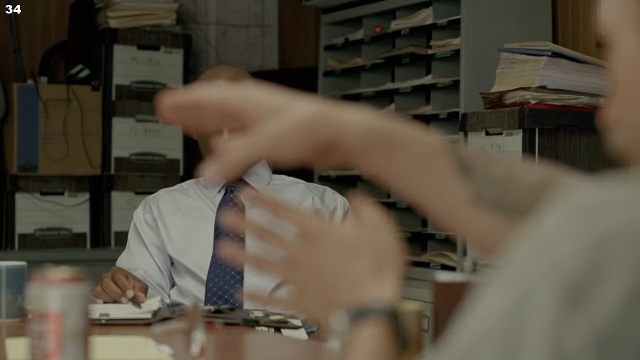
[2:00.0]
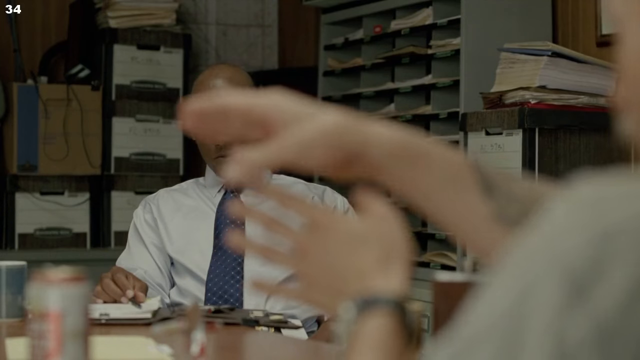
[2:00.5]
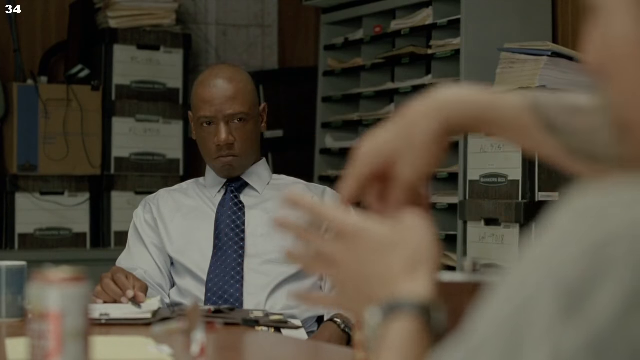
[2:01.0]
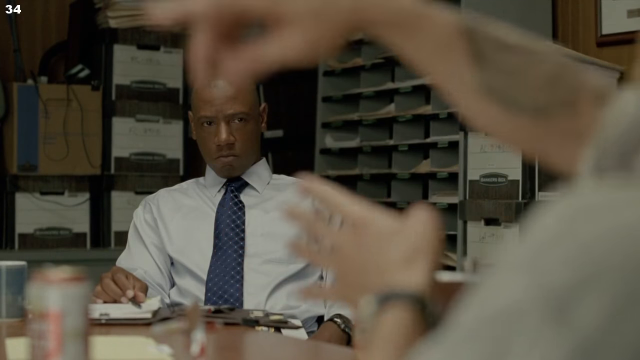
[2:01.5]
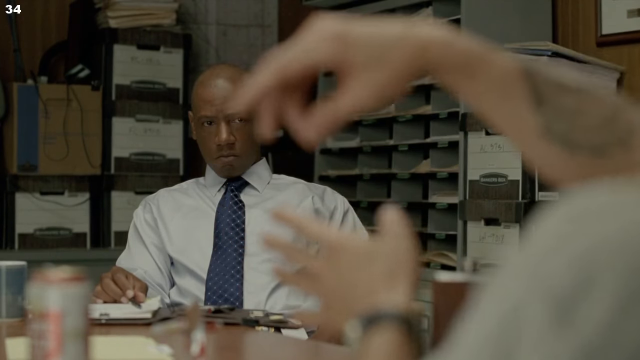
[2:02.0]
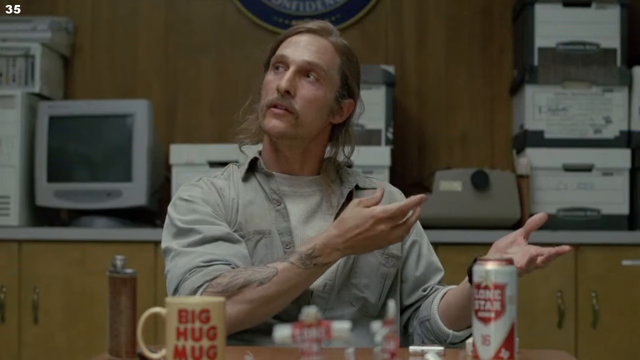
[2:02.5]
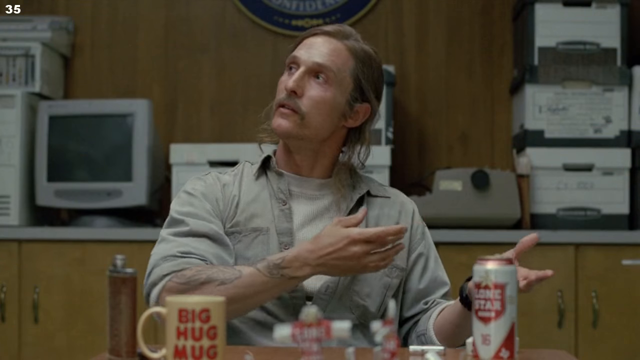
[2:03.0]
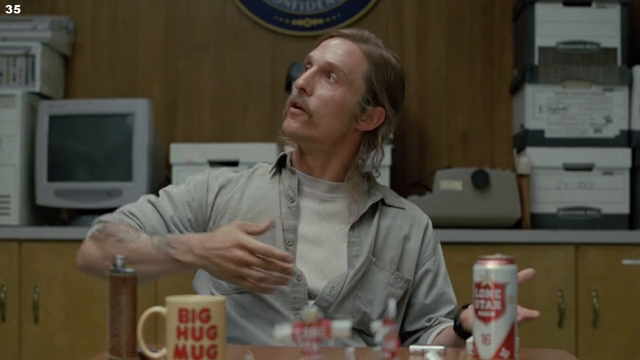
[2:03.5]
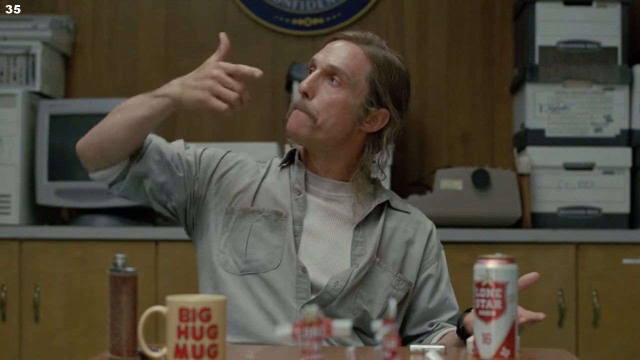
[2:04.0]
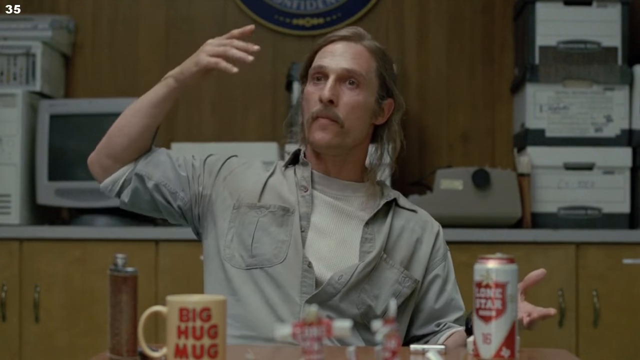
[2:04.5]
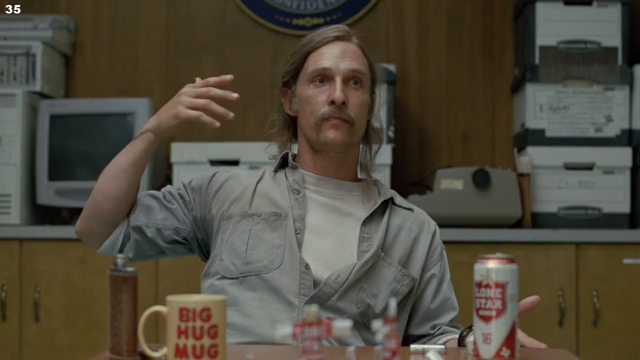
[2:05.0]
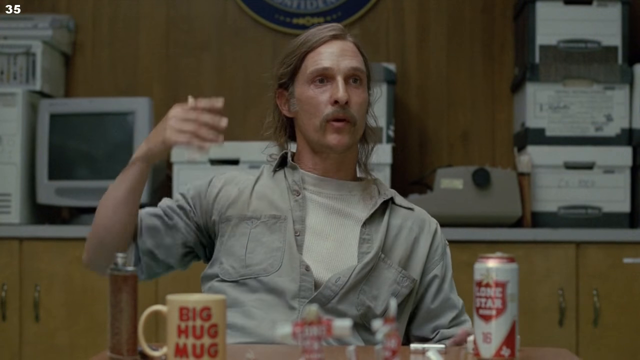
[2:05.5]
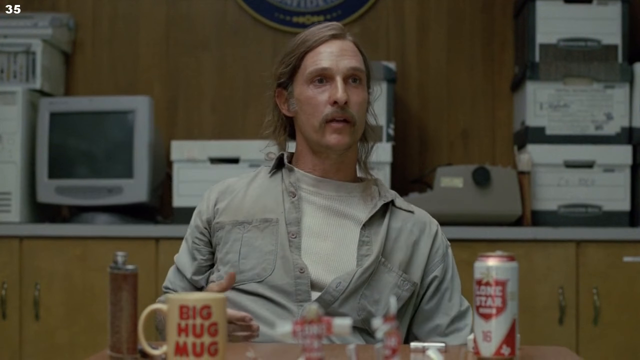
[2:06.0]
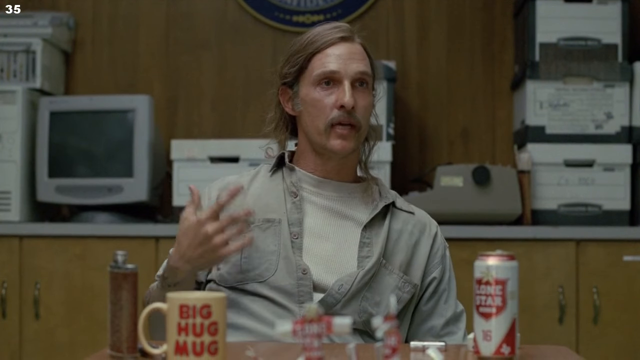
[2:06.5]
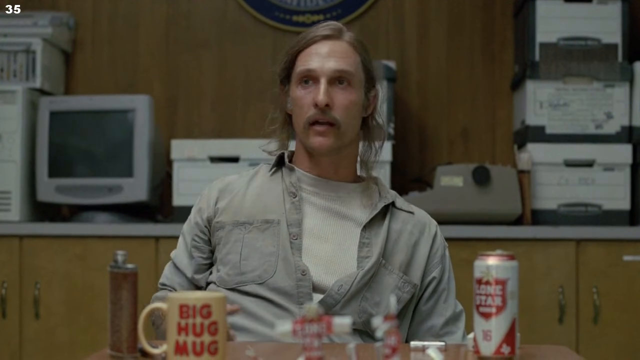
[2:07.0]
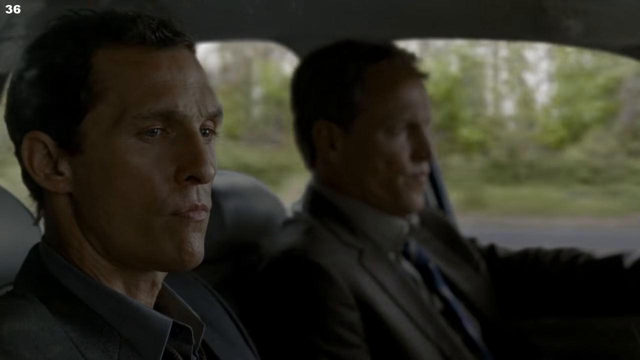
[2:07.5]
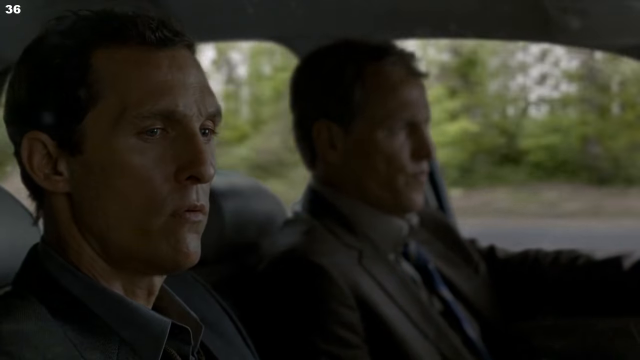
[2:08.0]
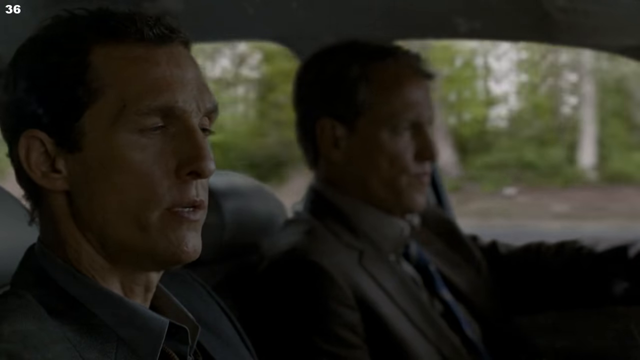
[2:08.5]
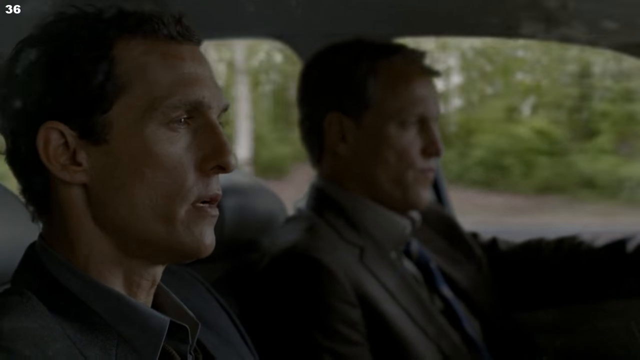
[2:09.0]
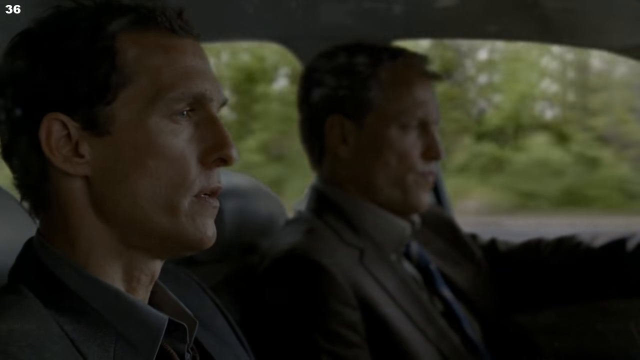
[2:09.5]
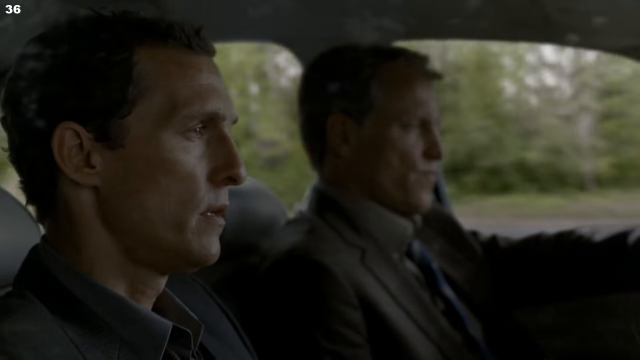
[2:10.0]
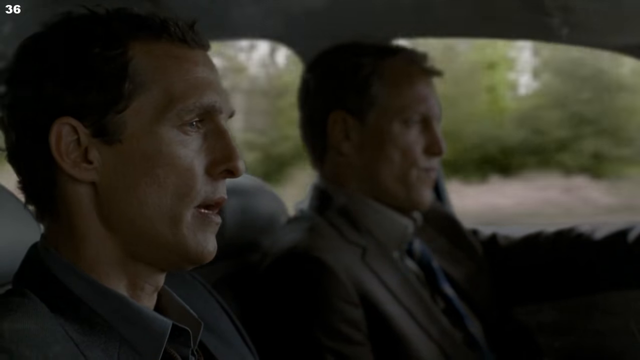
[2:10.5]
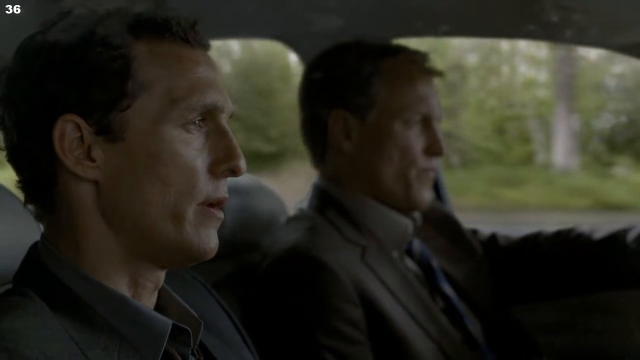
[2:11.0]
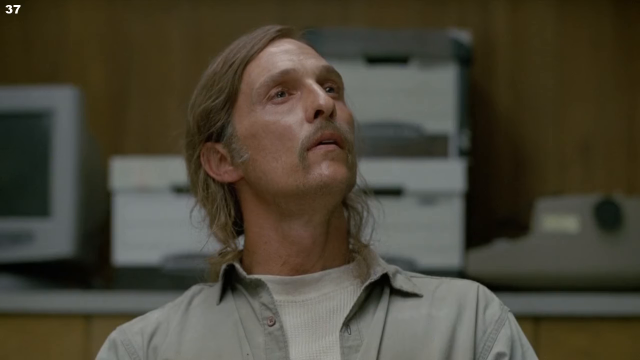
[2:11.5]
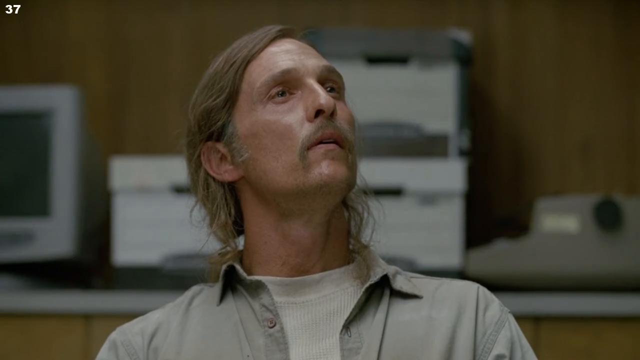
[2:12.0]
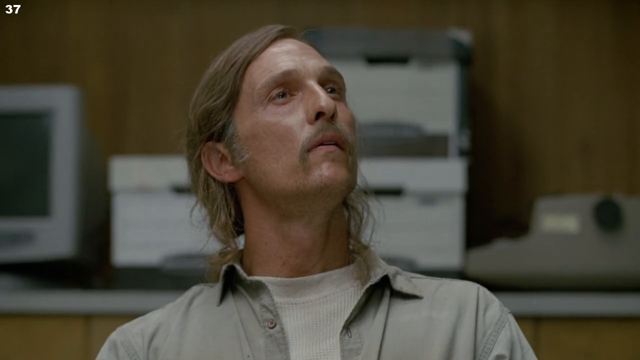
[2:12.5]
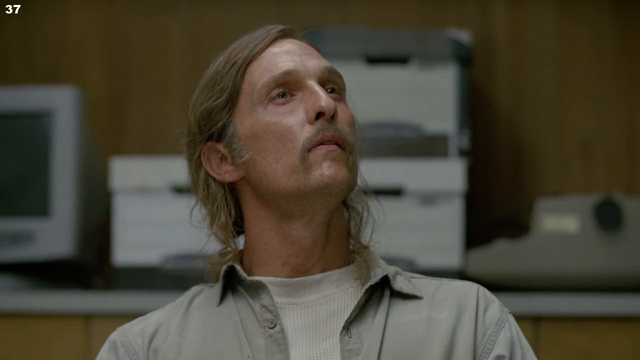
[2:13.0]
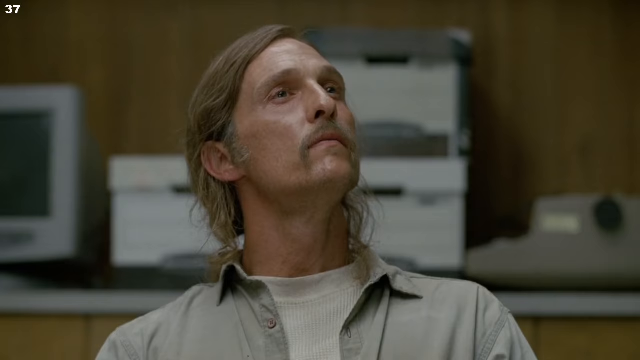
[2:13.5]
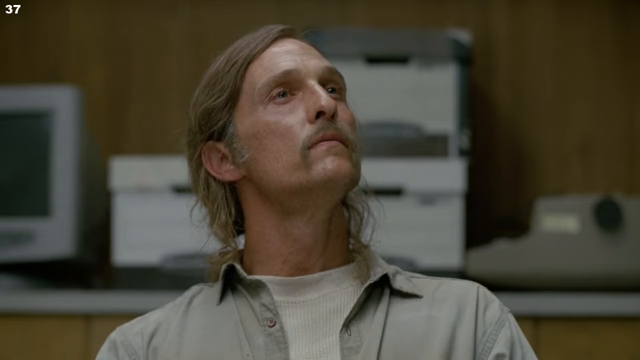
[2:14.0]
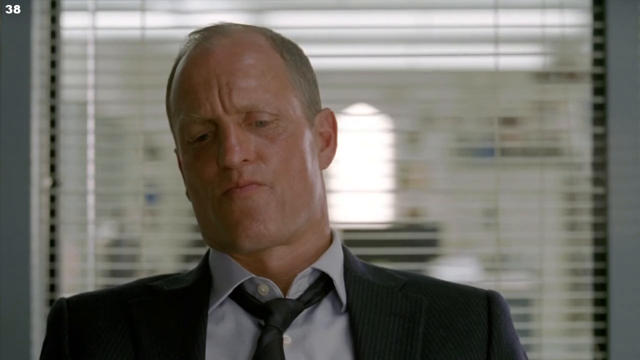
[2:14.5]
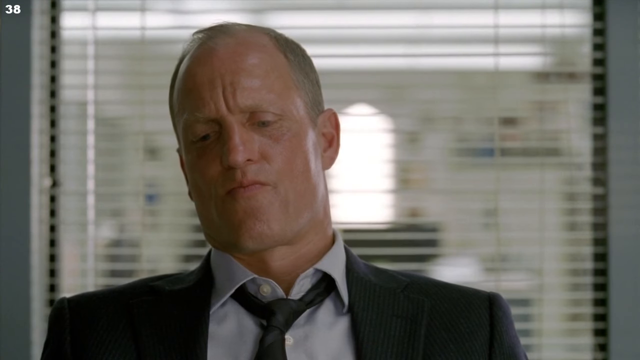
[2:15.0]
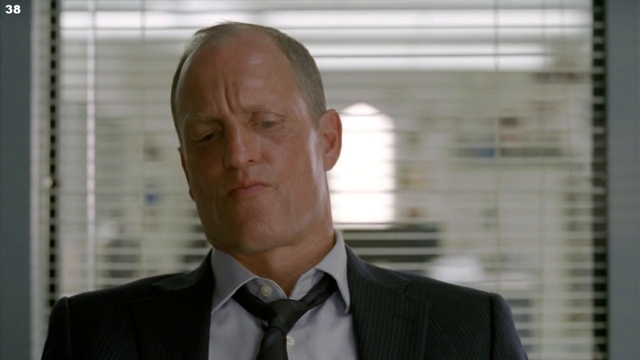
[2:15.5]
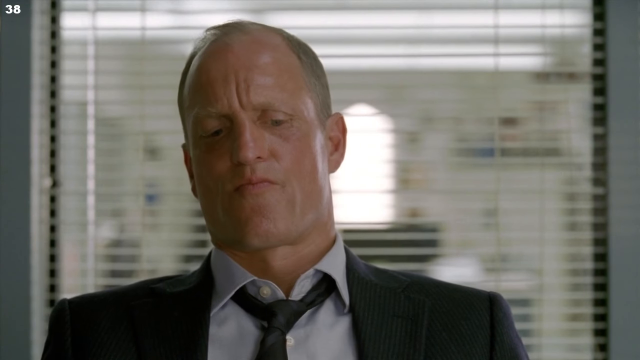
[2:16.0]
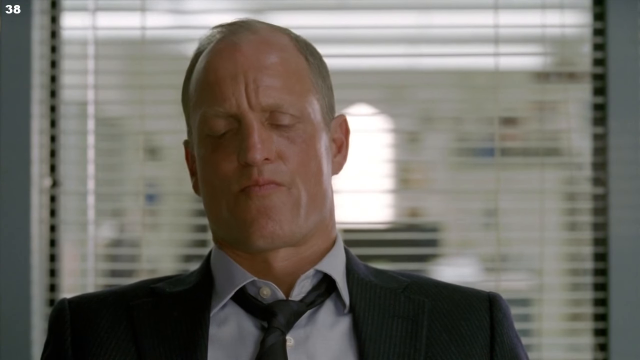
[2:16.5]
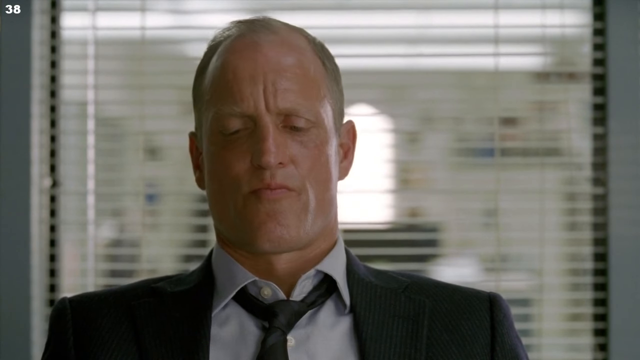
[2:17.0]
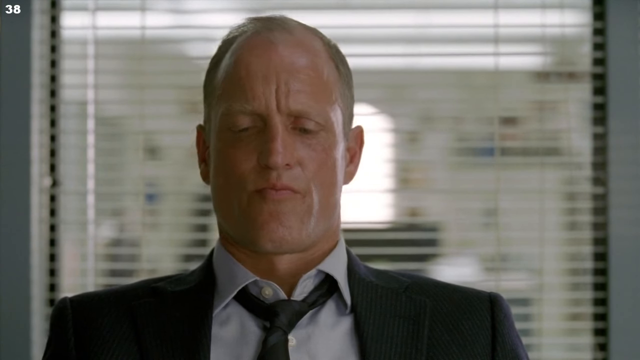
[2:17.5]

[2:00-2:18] A man describes to others what happened, using hand movements to symbolize guns and pointing, apparently indicating that guns and bullets were everywhere and people were shooting. The police take notes, and the man in the black suit looks serious. Two other men travel in a car. The man may be remembering past events and leading the police somewhere.